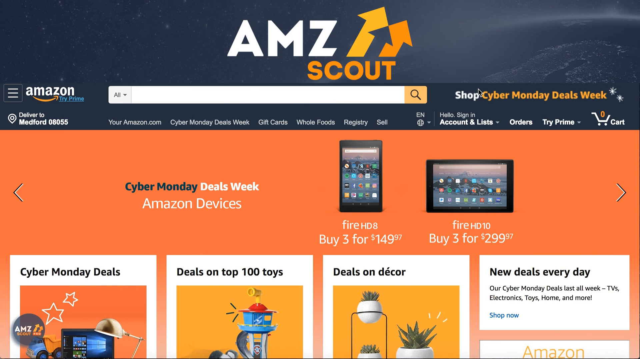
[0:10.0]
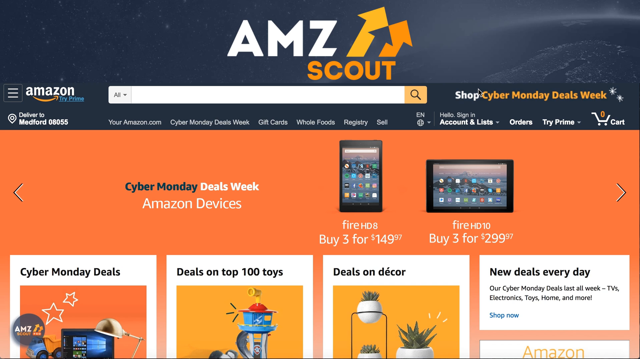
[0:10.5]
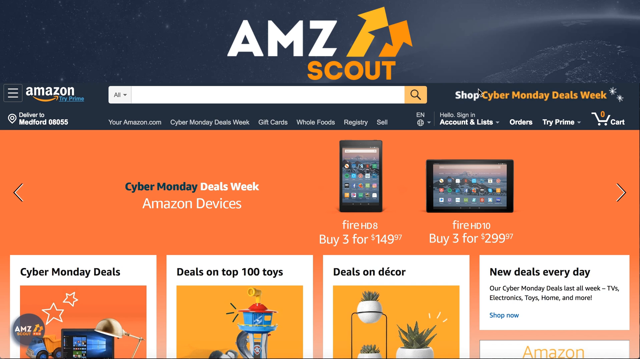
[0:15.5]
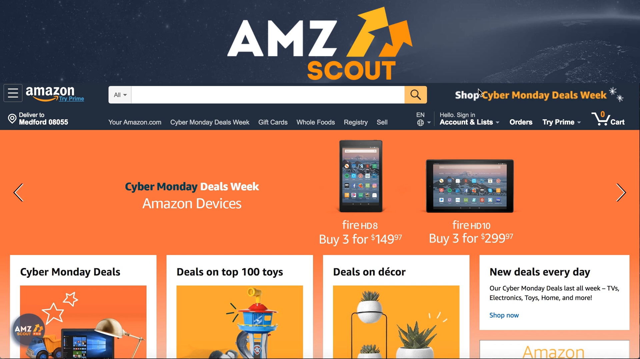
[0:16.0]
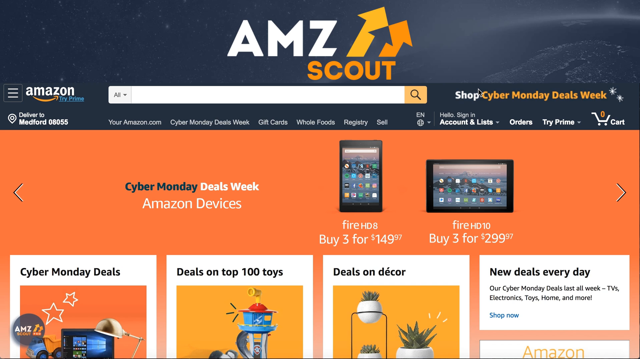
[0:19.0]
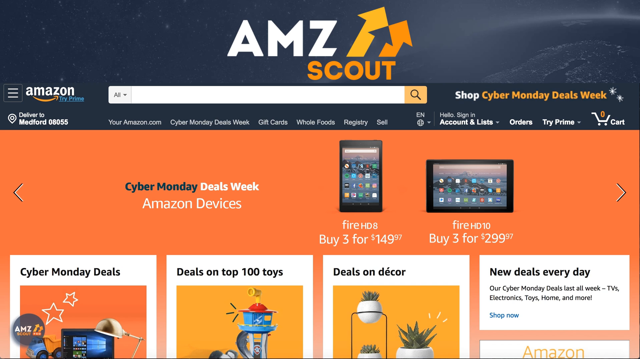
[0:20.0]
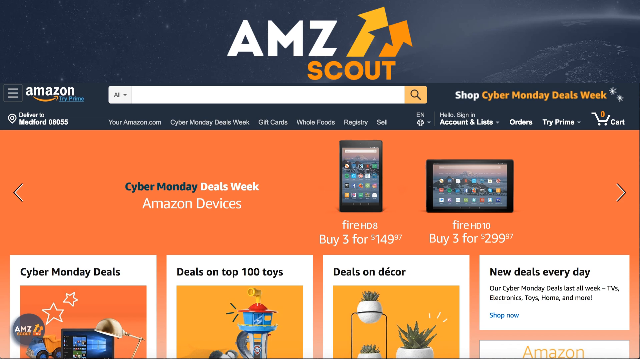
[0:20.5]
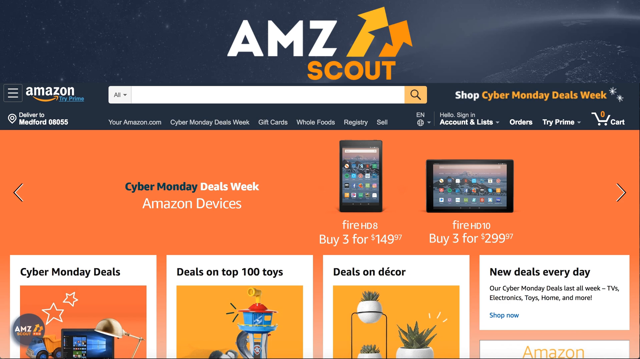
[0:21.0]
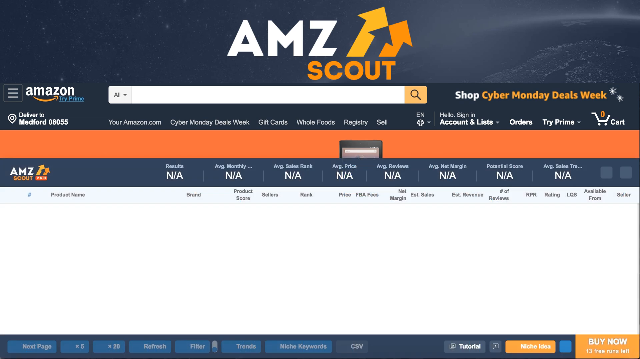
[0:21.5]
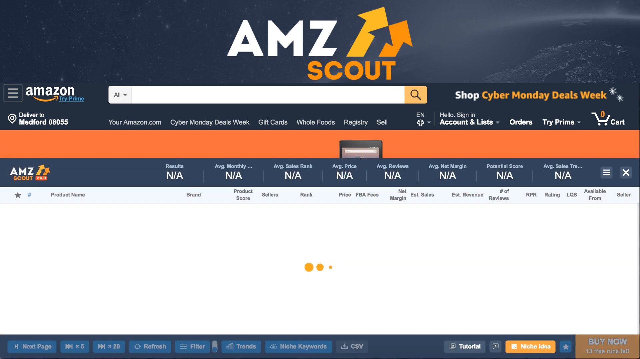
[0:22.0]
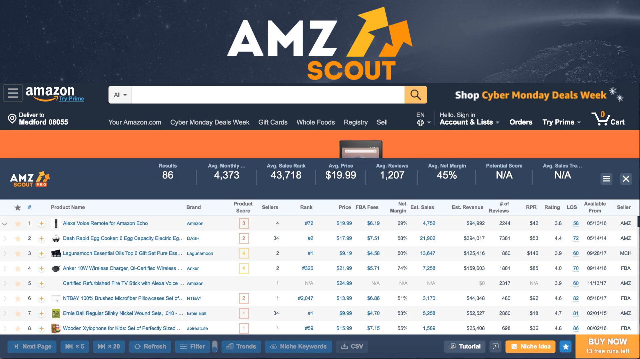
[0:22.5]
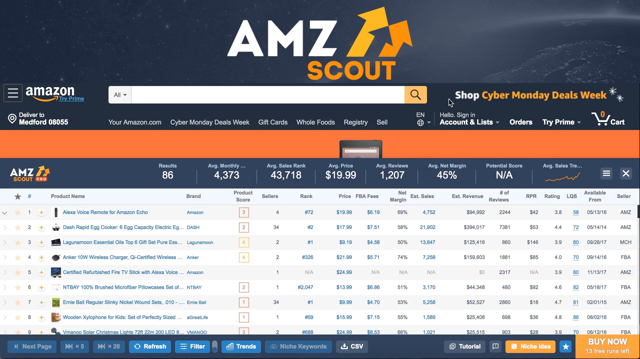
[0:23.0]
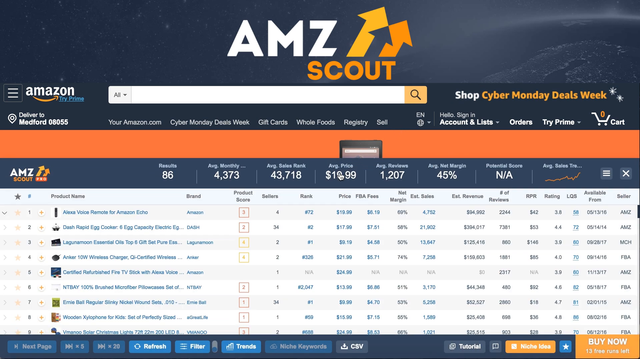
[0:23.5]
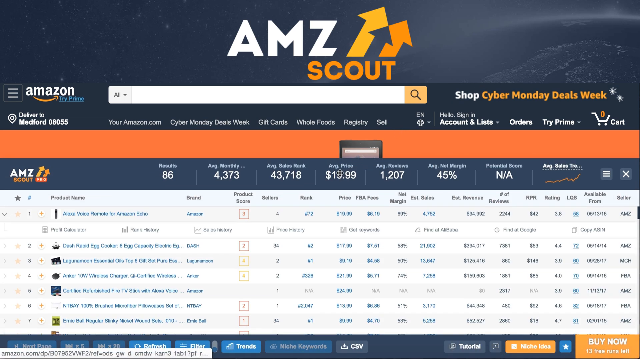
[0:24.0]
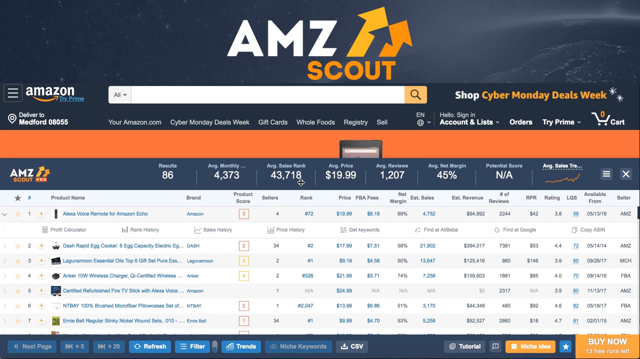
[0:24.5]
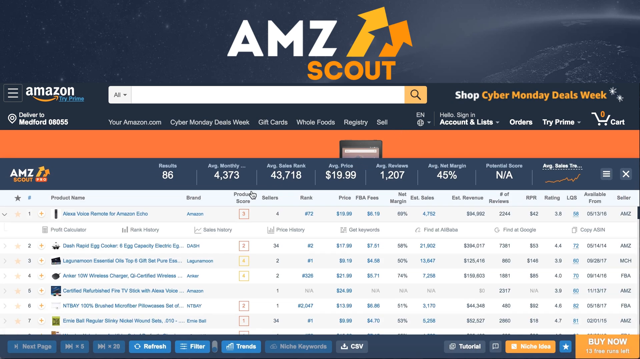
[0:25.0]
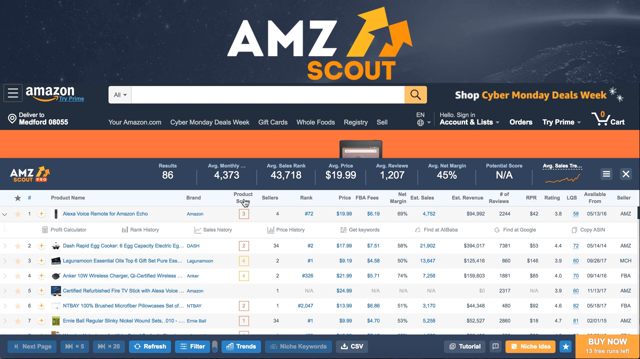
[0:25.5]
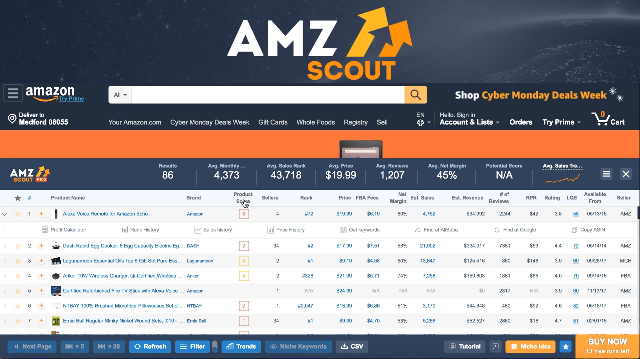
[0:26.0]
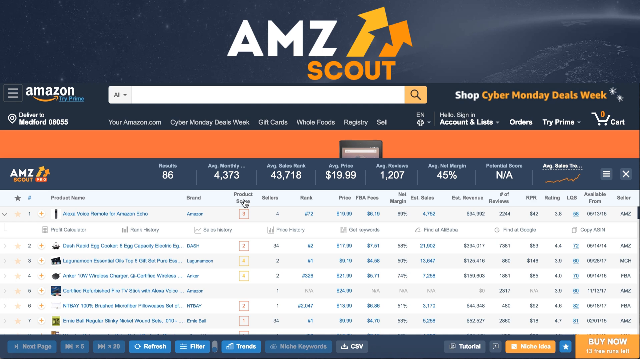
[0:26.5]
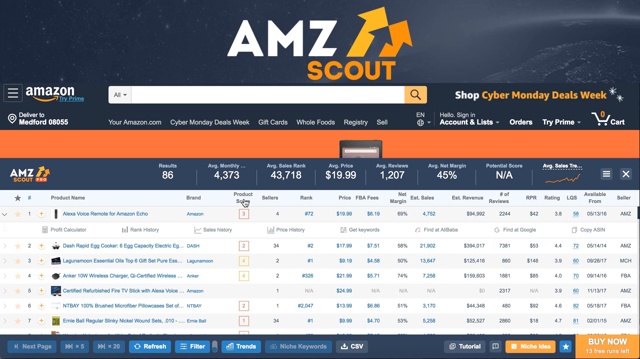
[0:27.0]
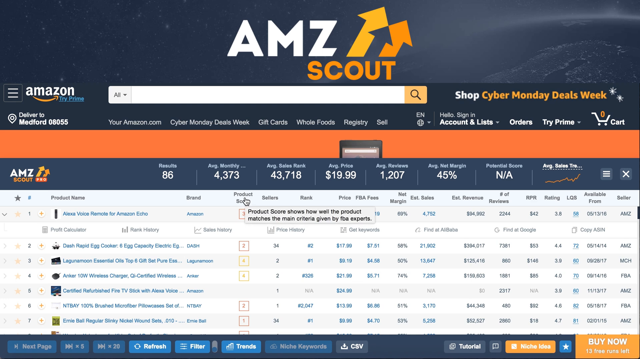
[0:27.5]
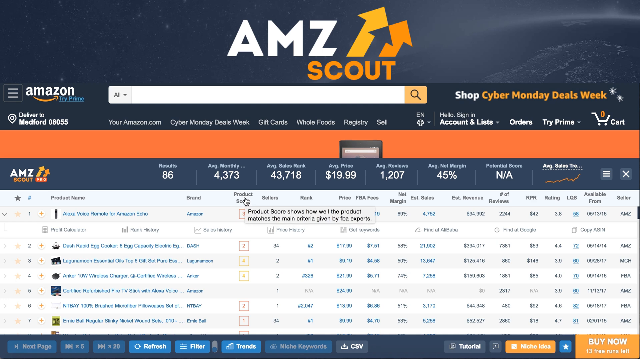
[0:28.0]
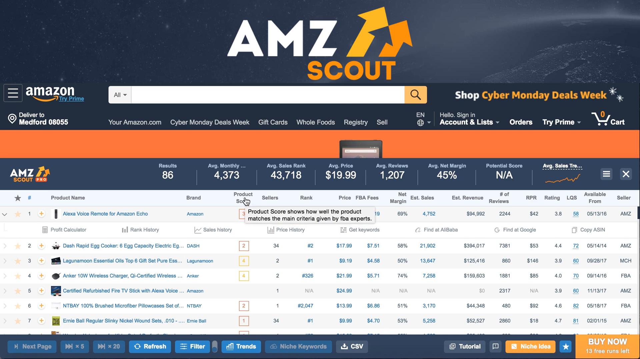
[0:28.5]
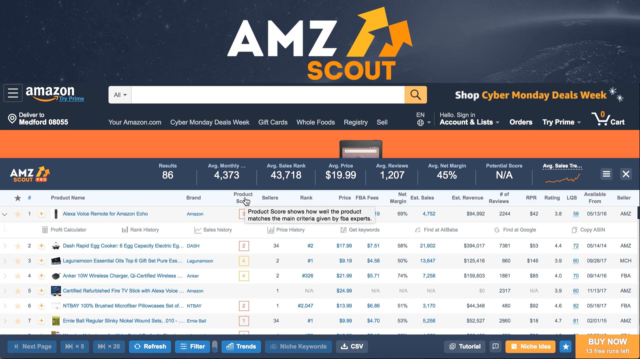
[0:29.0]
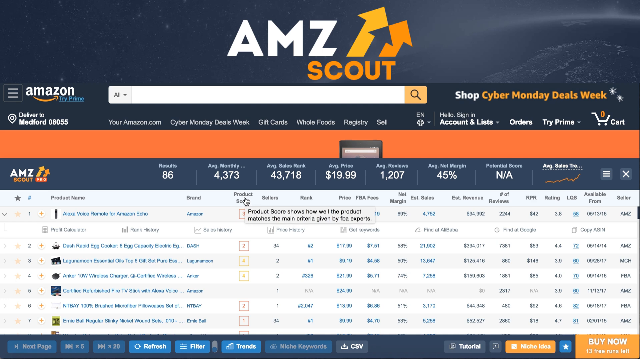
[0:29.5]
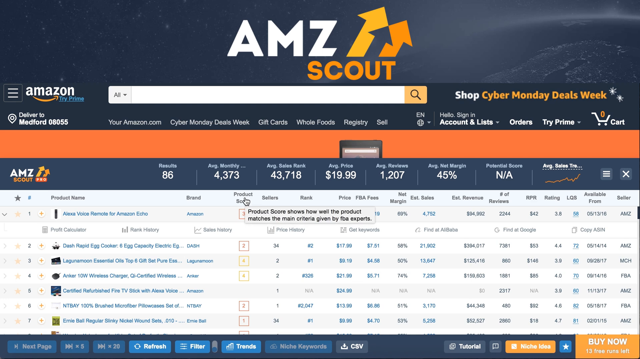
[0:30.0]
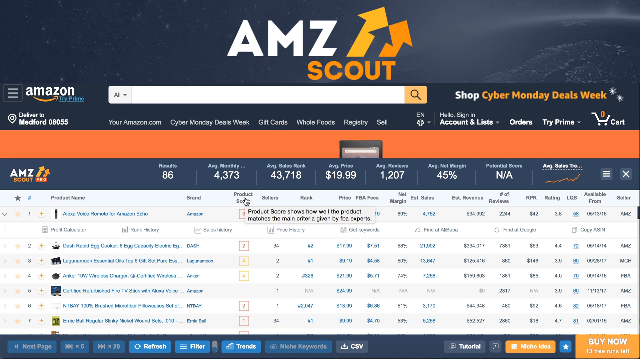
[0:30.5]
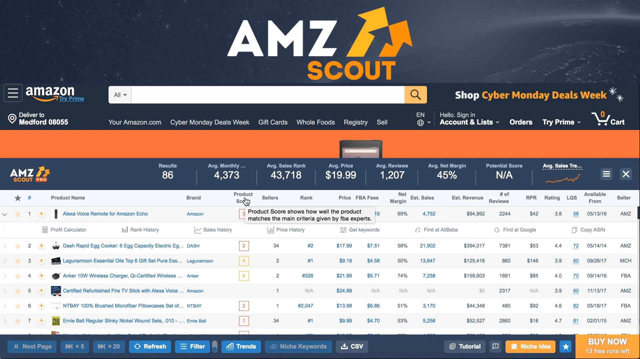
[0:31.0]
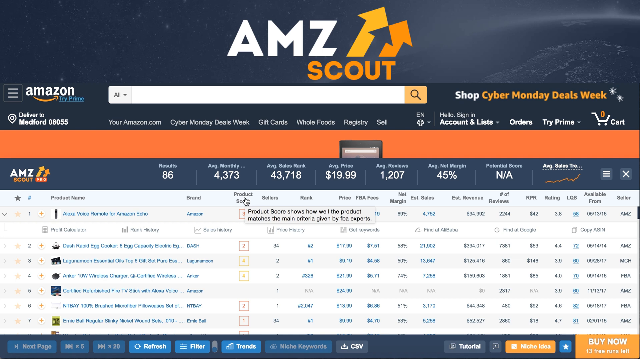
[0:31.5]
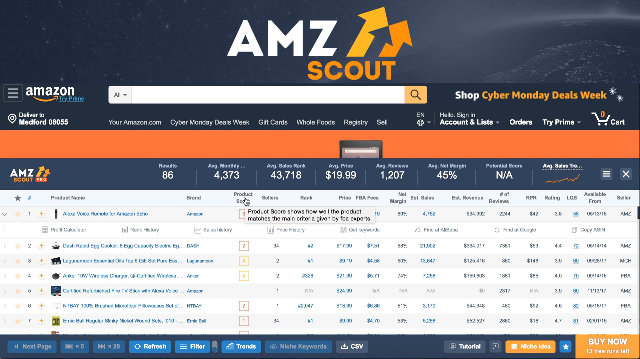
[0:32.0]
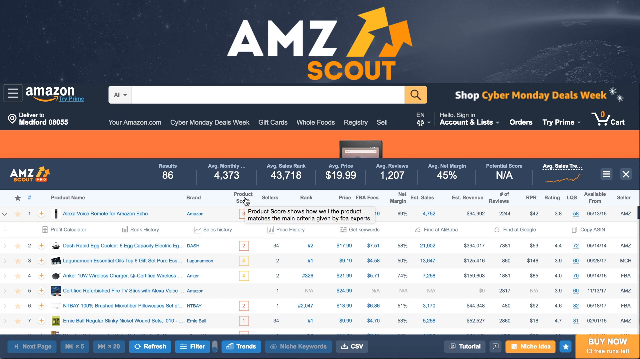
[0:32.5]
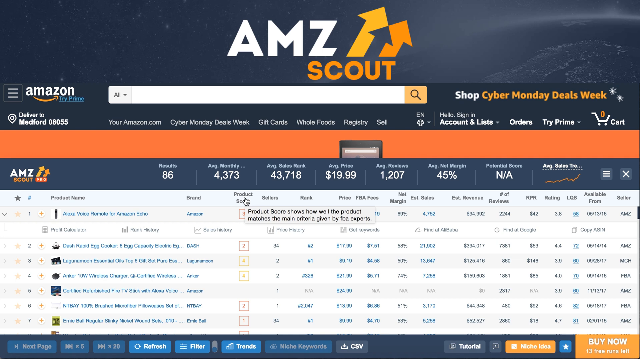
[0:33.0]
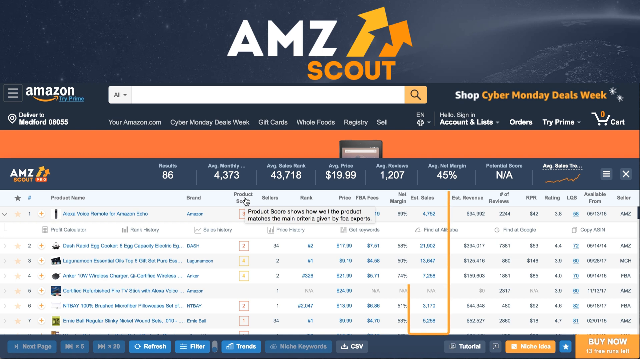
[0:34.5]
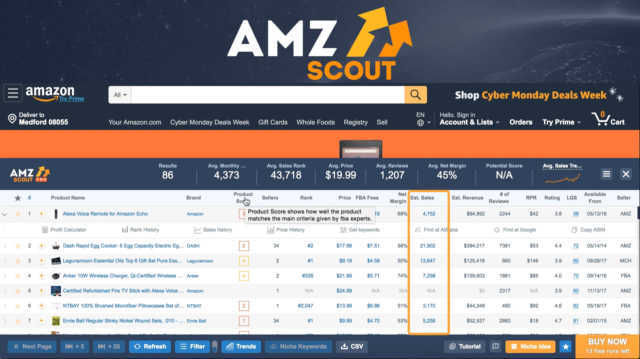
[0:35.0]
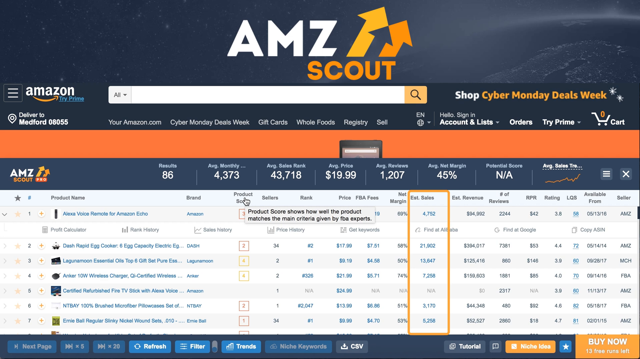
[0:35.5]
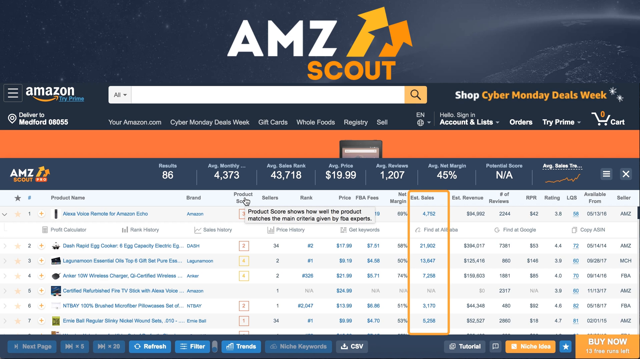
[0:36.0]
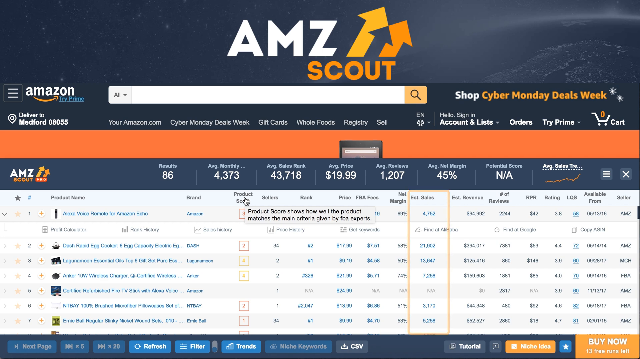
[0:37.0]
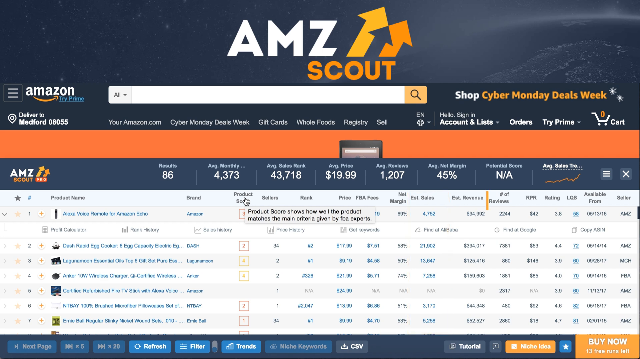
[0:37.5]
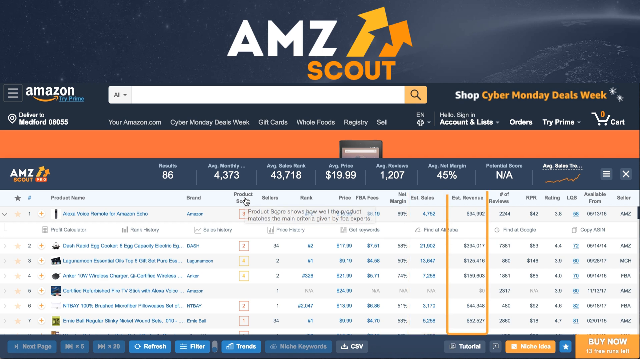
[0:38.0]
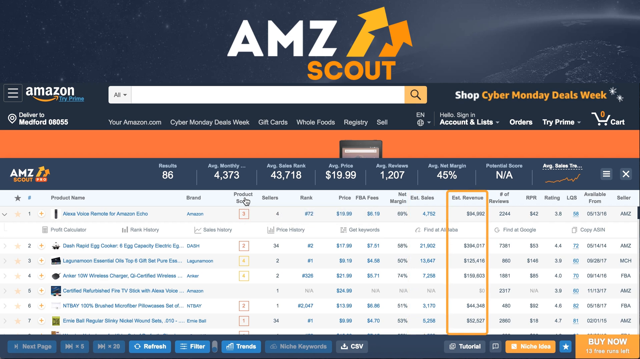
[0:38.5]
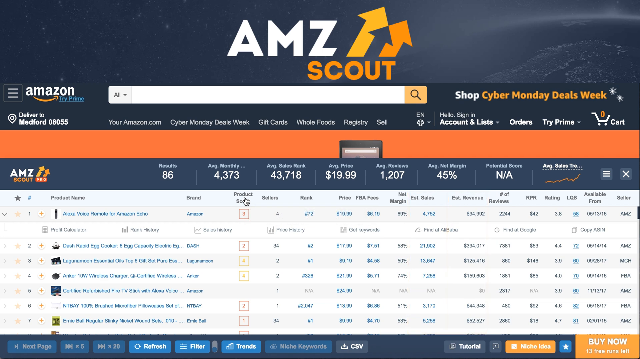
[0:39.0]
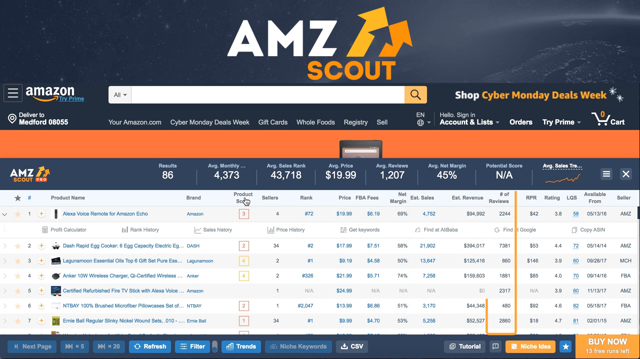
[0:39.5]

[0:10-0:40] The AMZ Scout logo is placed over an Amazon page reading "Shop Cyber Monday Deals Week". Under Cyber Monday deals with Amazon devices, devices are shown along with a couple of clickable tiles for deals on top 100 toys and deals on decor. A text box says "new deals every day" and "our Cyber Monday deals last all week TVs electronics toys homes and more shop now", with a hyperlink. The view then goes to a page where a menu pops up with the AMZ Scout logo. The menu lists results, average monthly, average sales rank, average price, average reviews, average net margin, potential score, average sales, and something with a graph, with numbers below each heading. A list of products then populates with various numbers, such as price, quantity, rank and number of sellers. The cursor hovers over product score and a small text box appears: "Product score shows how well the product matches the main criteria given by the experts." A square is then drawn around estimated sales, highlighting that column, which shows different sales figures for each product name.